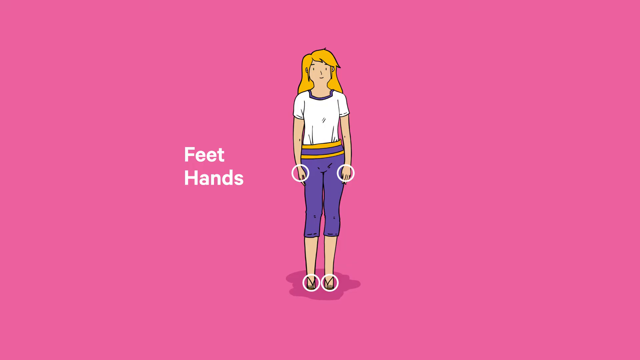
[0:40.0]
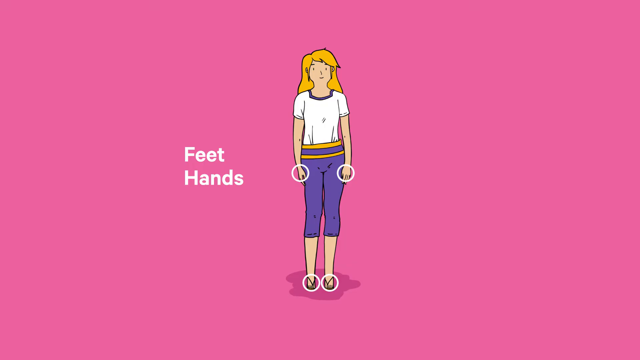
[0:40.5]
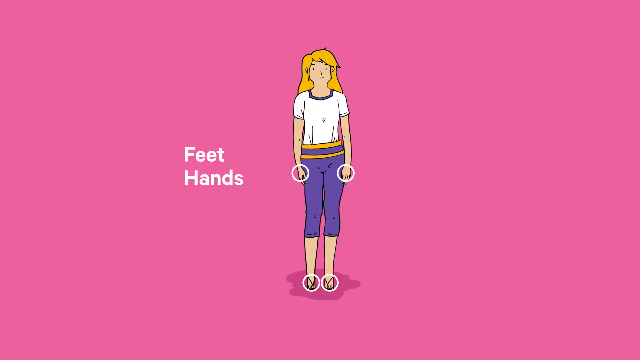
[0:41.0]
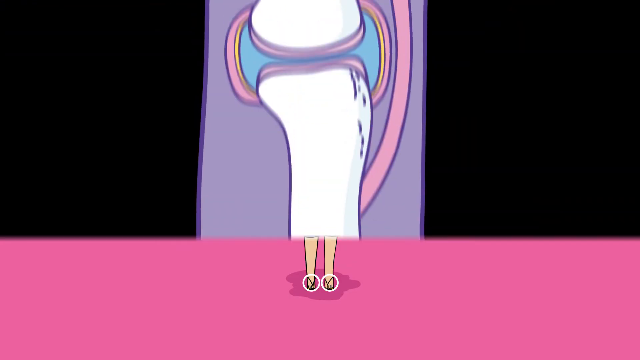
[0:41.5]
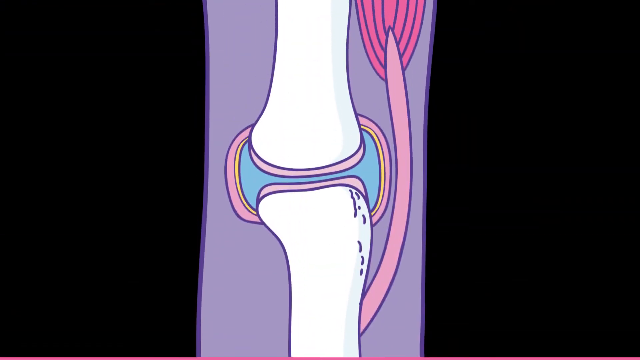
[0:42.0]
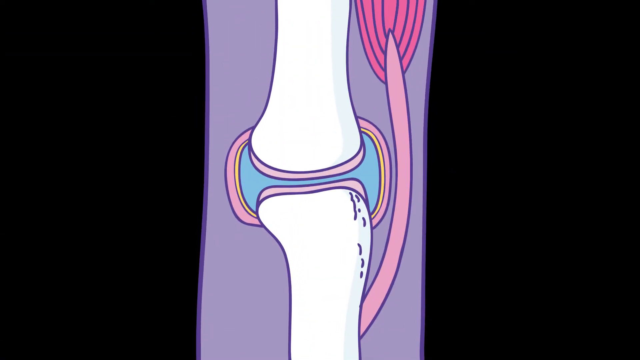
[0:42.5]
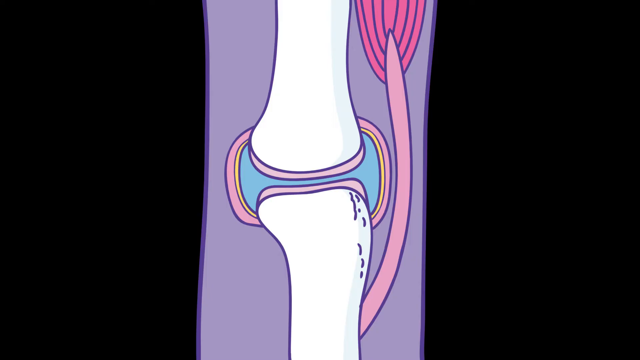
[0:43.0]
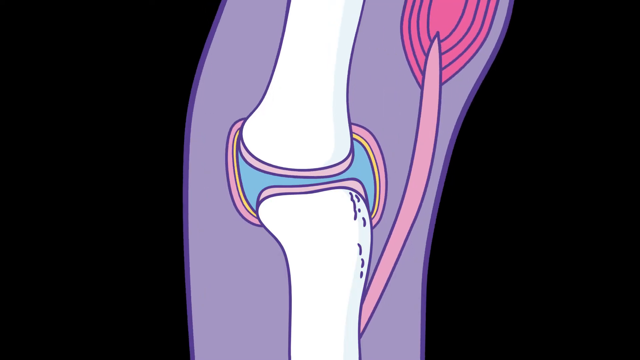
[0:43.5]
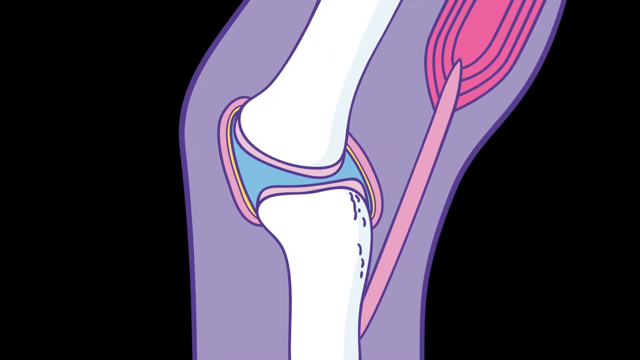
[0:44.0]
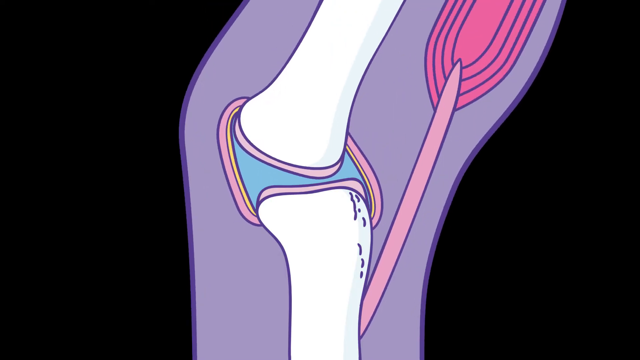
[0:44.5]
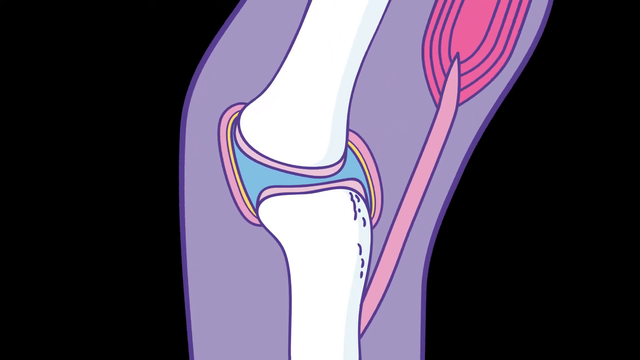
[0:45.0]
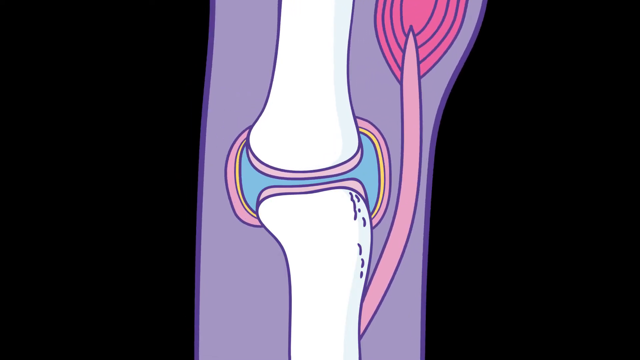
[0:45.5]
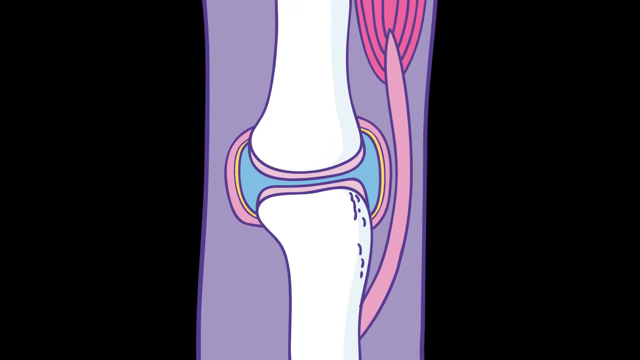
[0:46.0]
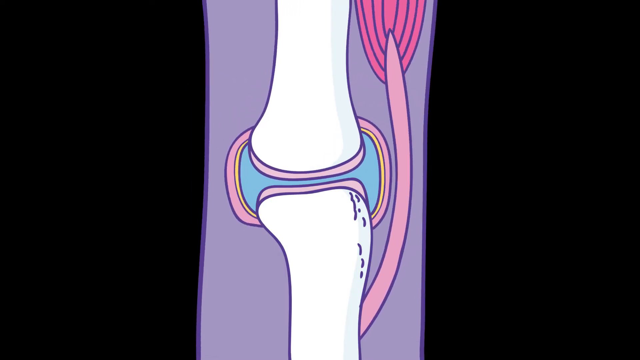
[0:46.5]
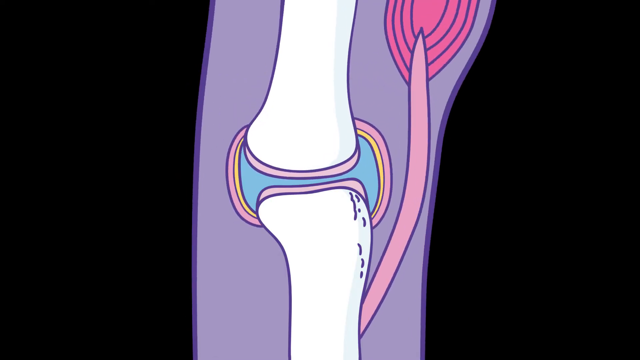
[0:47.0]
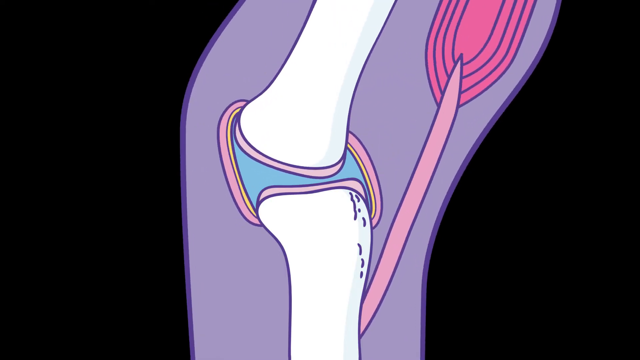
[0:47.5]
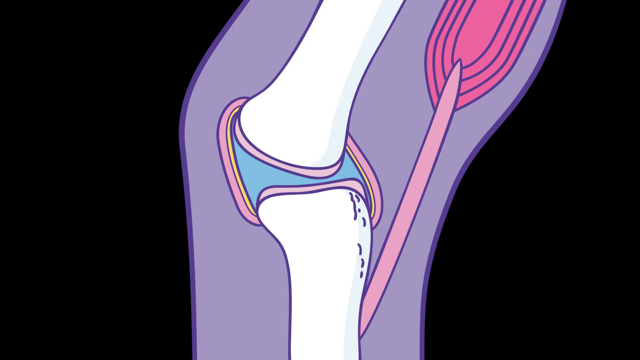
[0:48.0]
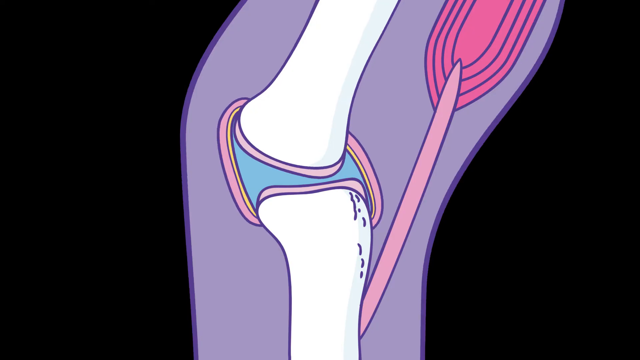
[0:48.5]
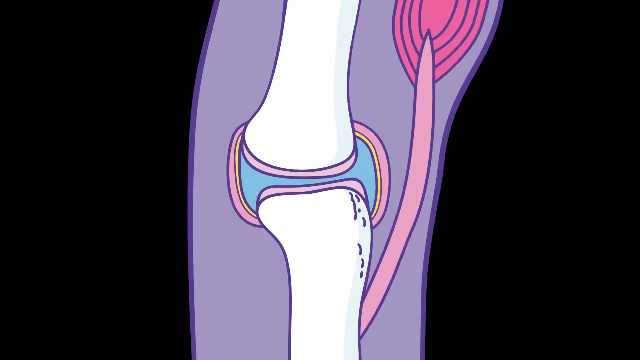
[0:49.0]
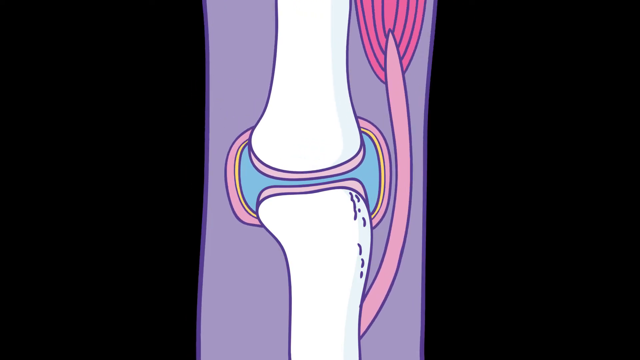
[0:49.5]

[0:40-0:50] Circles appear around the girl's hands and feet against the pink background. The girl is in a blue-purple outfit with a white shirt and blonde hair. The view goes to a close-up of a joint, possibly a leg, knee, arm or elbow, showing it bending back and forth along with what are possibly tendons. The joint looks more like a knee.